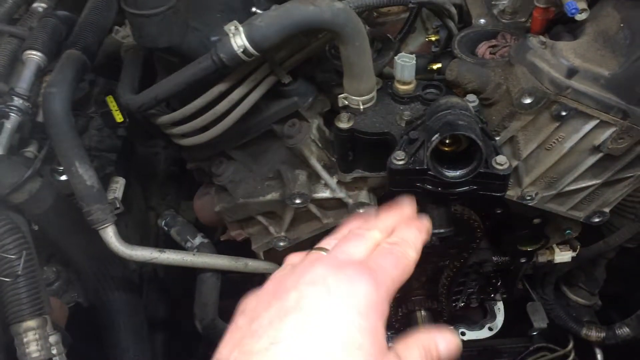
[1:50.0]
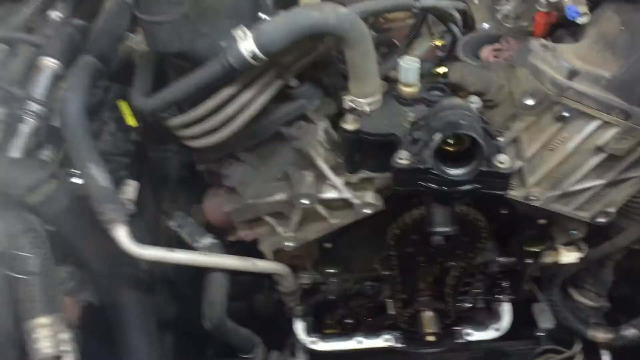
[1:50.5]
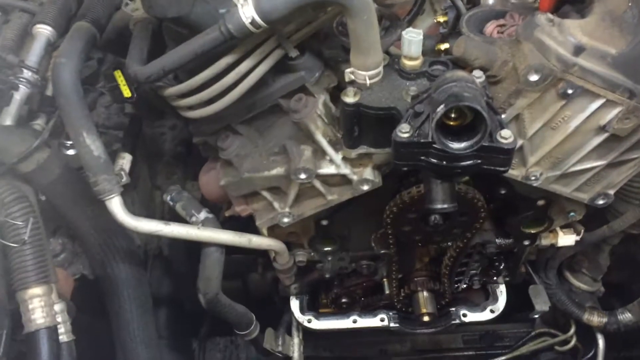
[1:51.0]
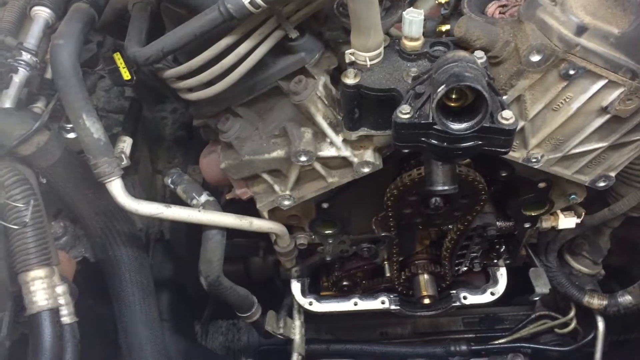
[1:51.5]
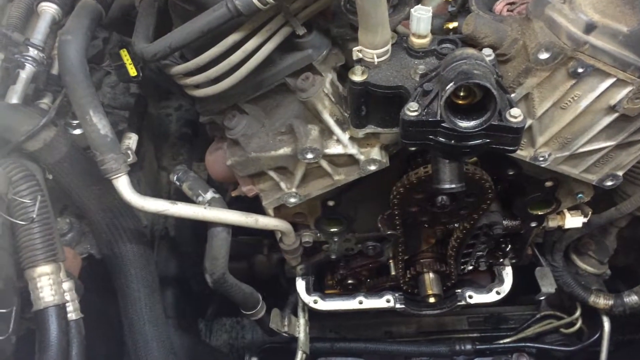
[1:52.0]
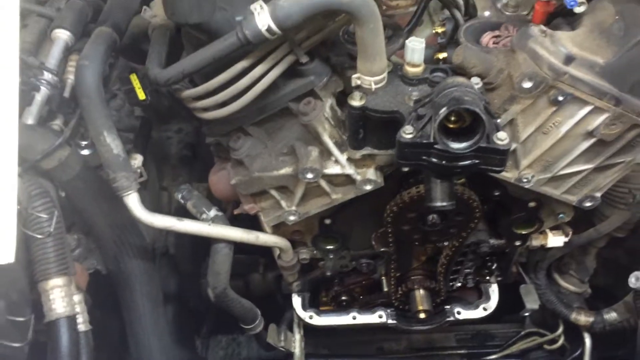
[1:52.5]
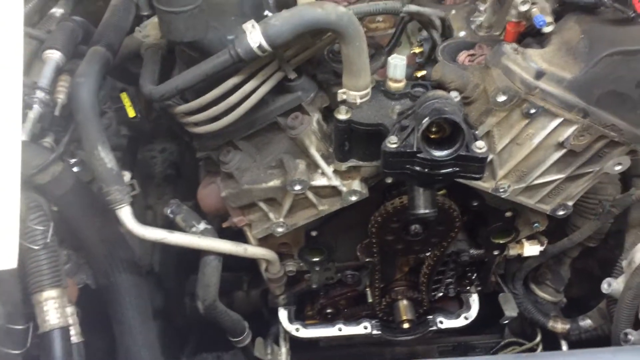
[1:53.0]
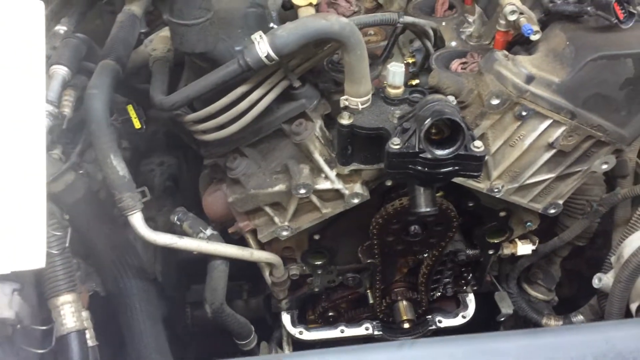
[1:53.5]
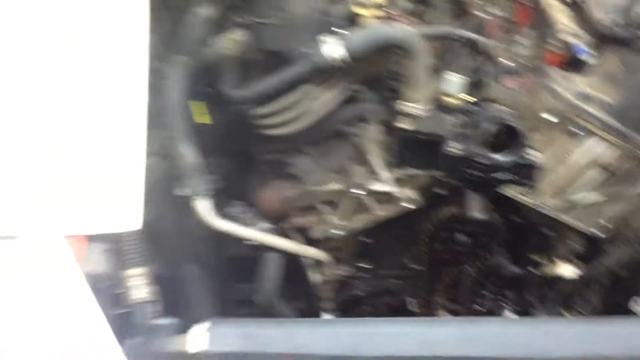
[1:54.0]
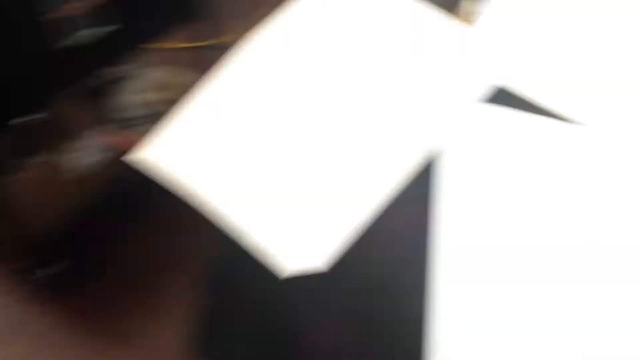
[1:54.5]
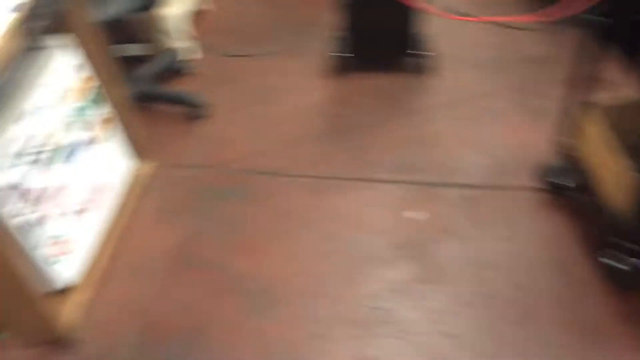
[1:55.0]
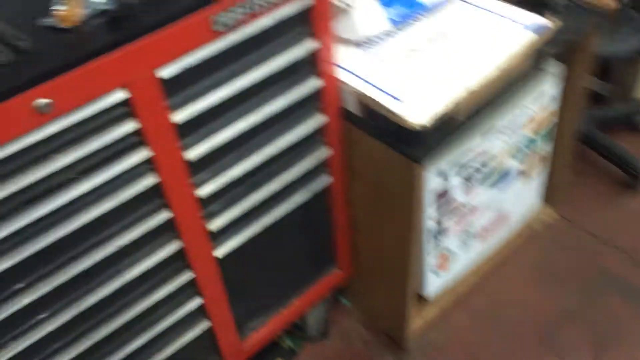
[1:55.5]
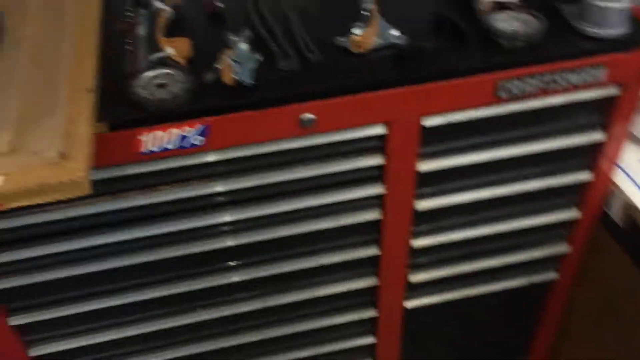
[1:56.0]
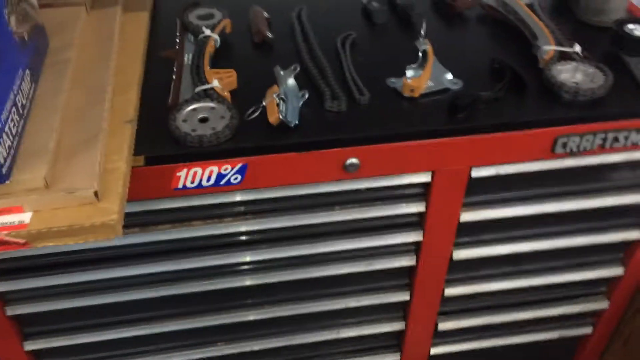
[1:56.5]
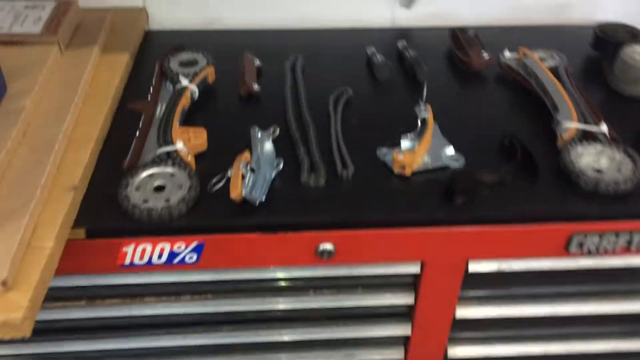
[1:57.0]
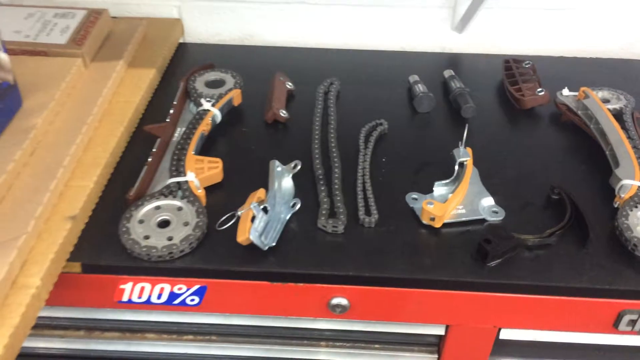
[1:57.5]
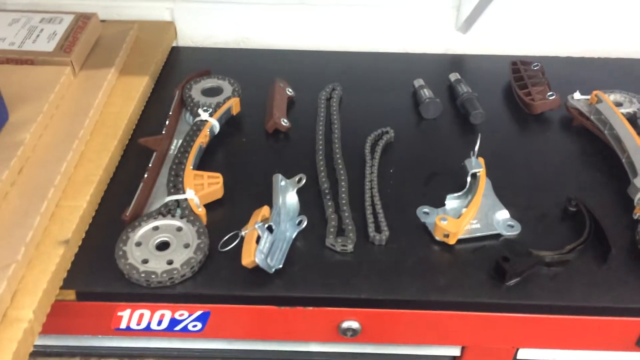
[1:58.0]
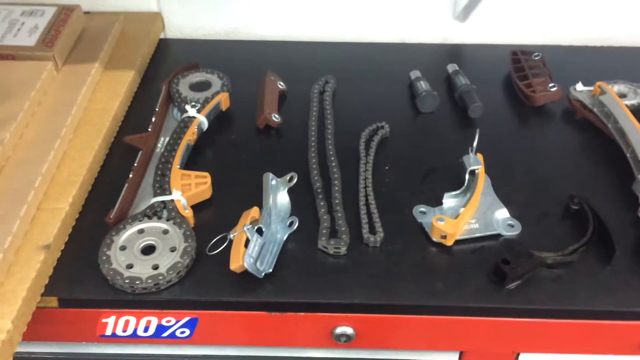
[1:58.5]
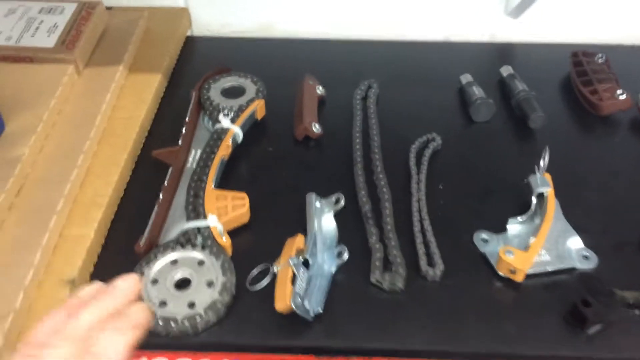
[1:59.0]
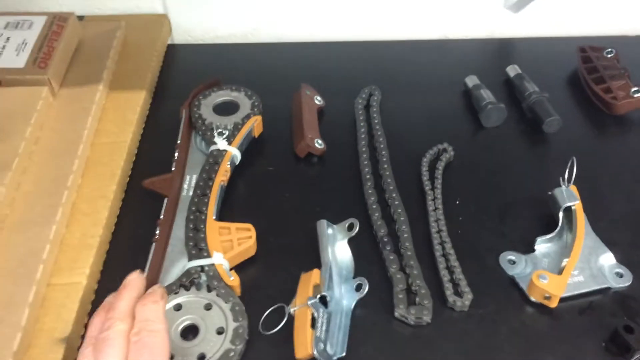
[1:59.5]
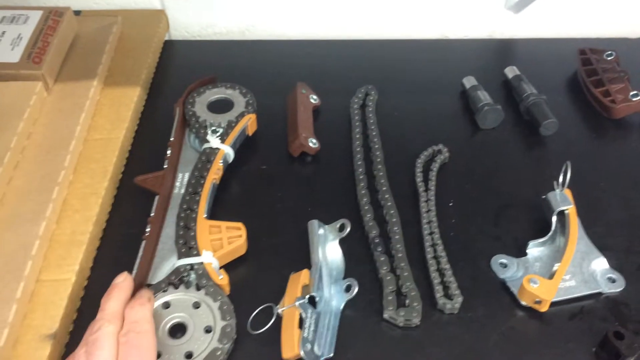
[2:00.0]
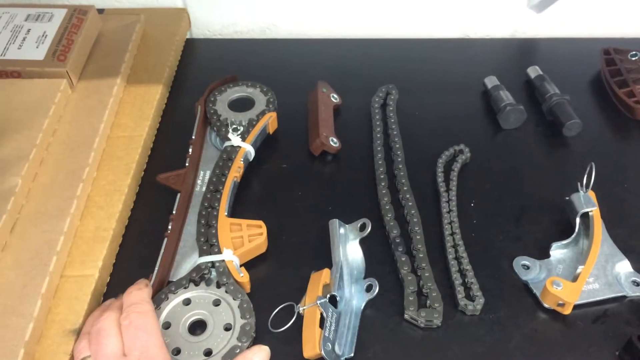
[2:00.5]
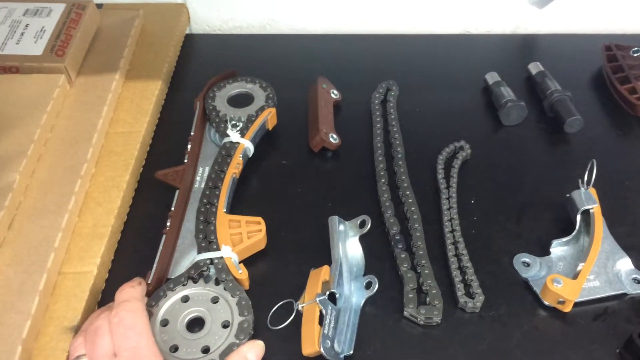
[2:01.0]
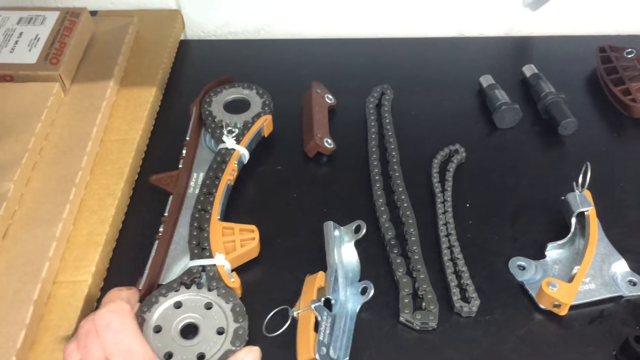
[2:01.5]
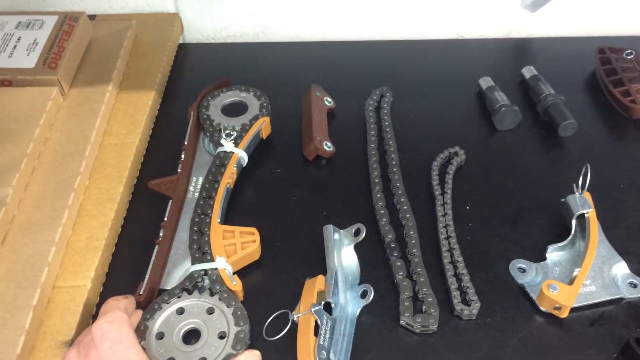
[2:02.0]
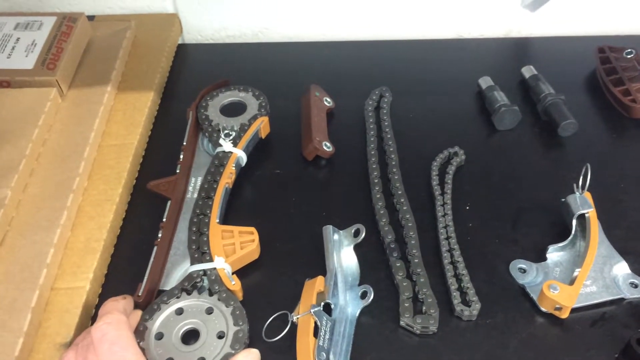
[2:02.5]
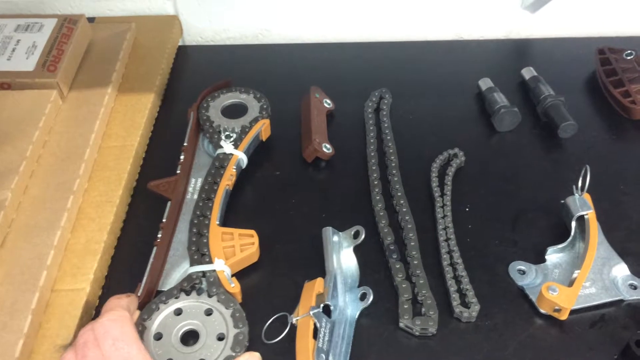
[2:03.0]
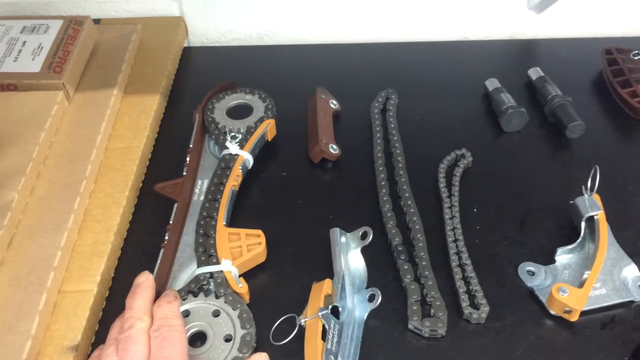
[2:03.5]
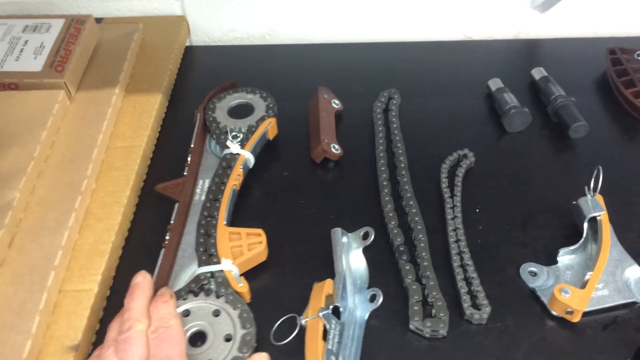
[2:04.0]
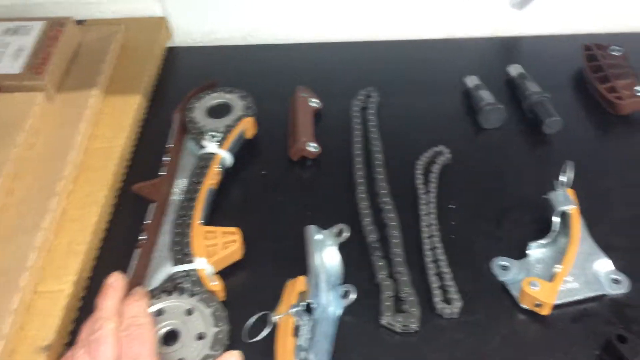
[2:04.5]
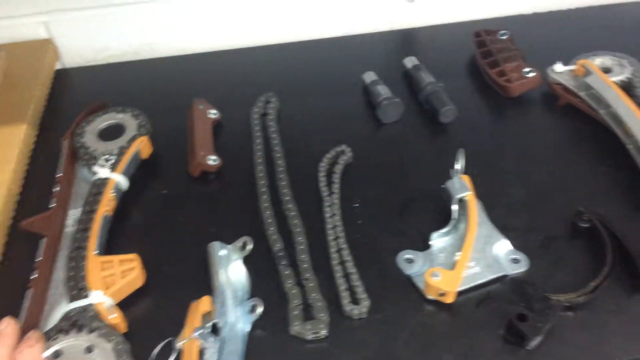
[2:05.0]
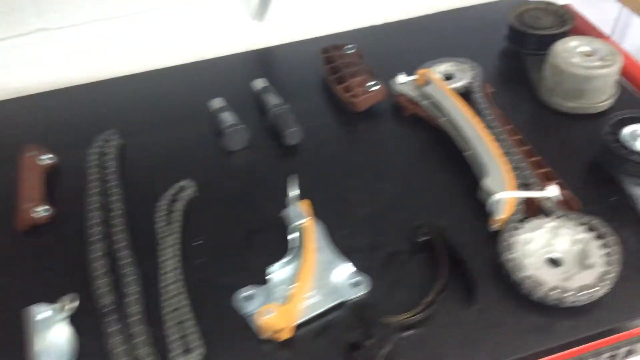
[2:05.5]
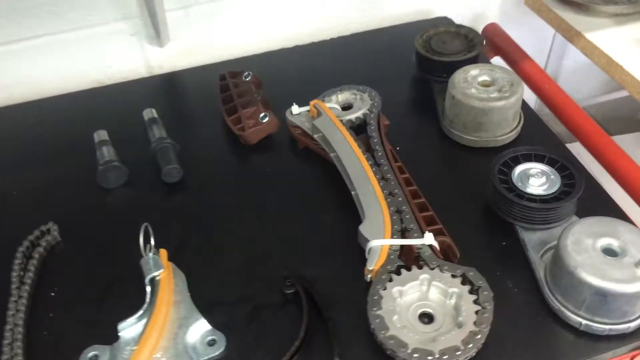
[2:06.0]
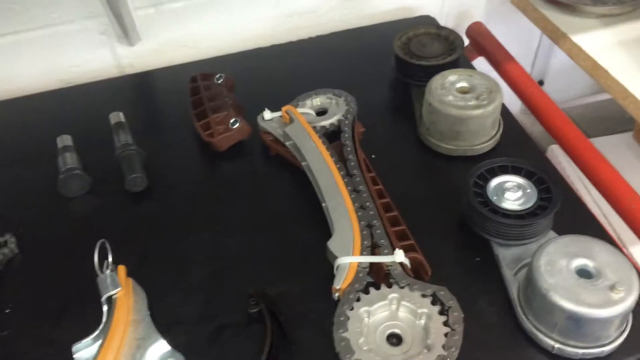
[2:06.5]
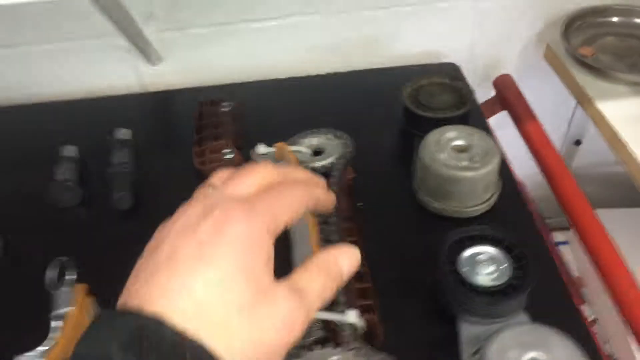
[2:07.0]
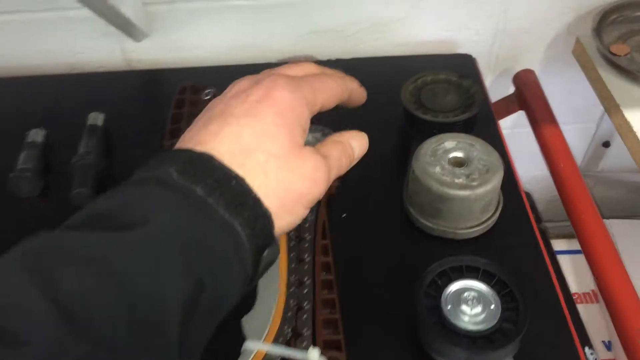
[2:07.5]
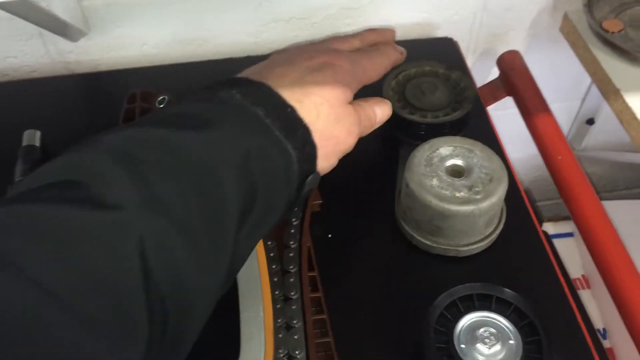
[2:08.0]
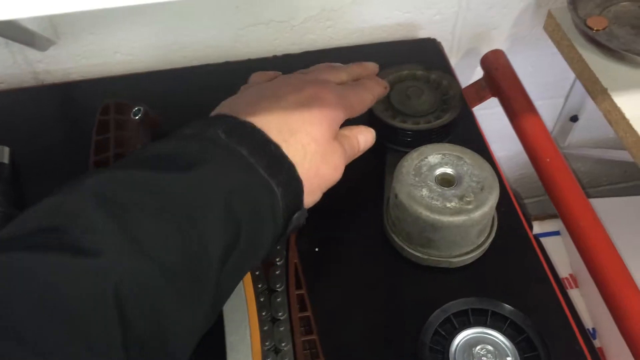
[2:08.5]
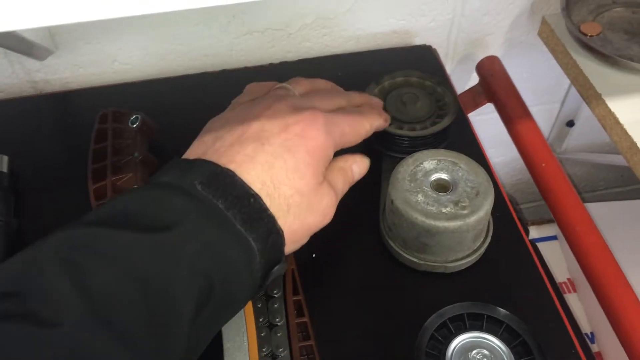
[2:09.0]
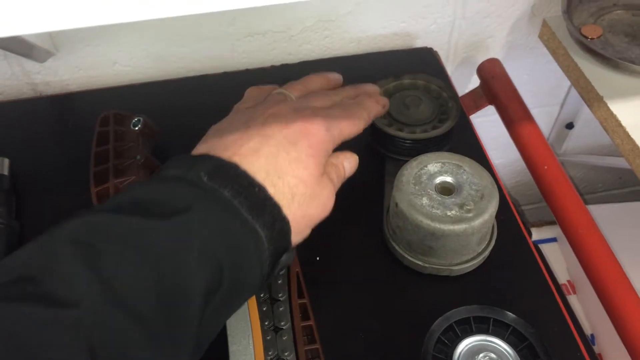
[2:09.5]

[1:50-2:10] The man points at the same component connected to the chain, then moves to another part of the workshop: a workshop table. Its surface is black, while its front is red with a sticker and what seems to be a vent, silver in color and open somewhat like window blinds. He moves the camera over the tools on the table. One tool looks like the chain on the car: it is black and attached to a silver tool that is brown at the top and orange at the bottom, and the orange section is zip-tied with the chain, pulled together. There is another brown tool and a silver tool that look the same and seem to be components that can be attached. There are also two chains lying loose, attached to nothing. At the end, he shows more tools and moves his hands toward a movable circular object at the top right of the table.